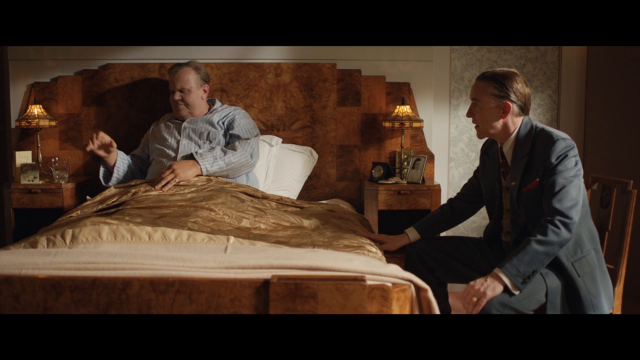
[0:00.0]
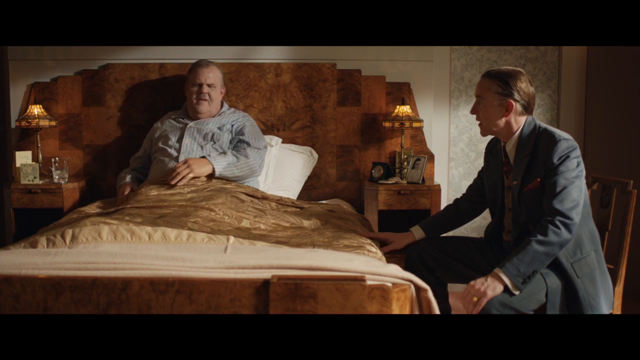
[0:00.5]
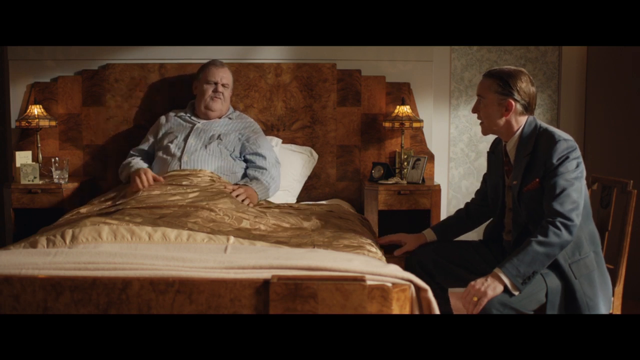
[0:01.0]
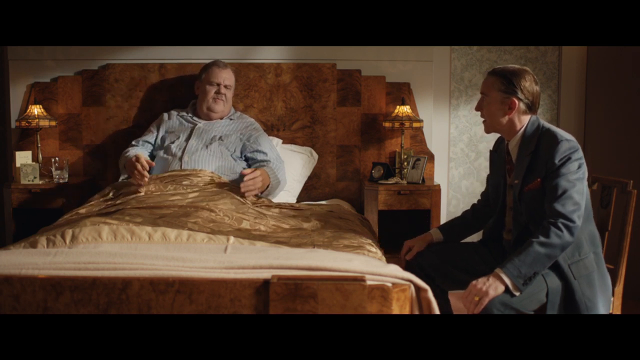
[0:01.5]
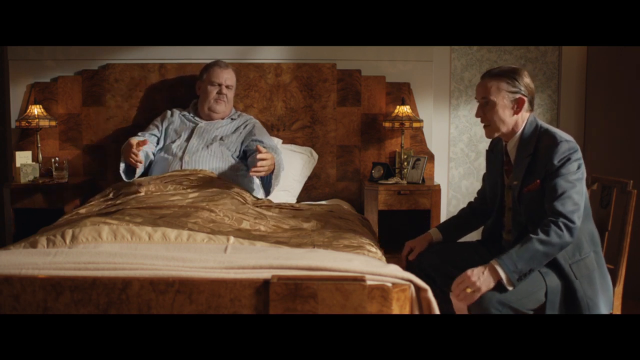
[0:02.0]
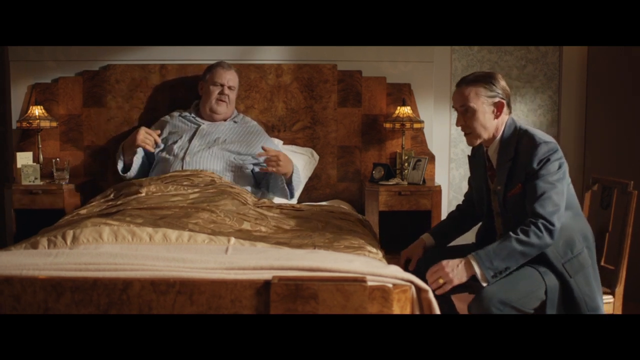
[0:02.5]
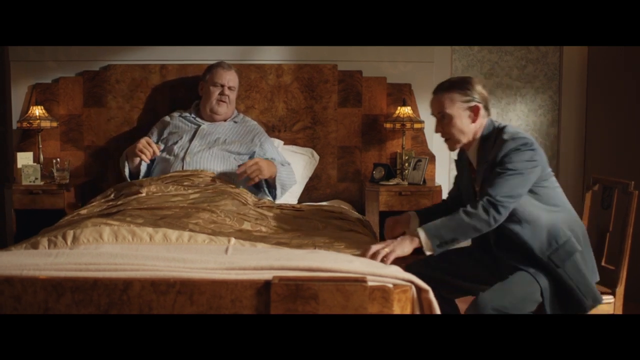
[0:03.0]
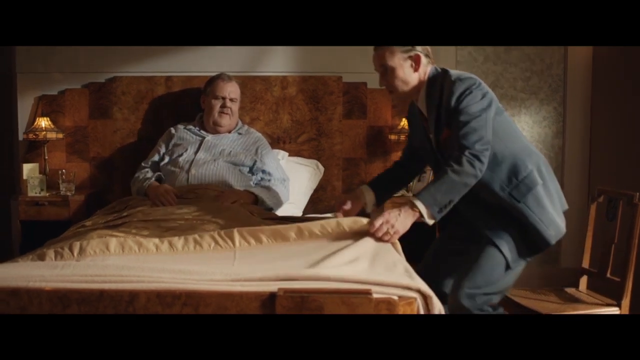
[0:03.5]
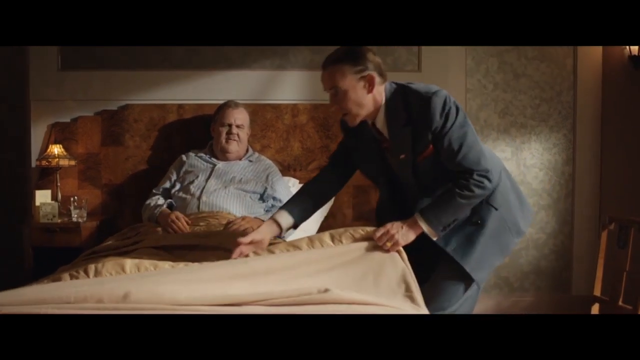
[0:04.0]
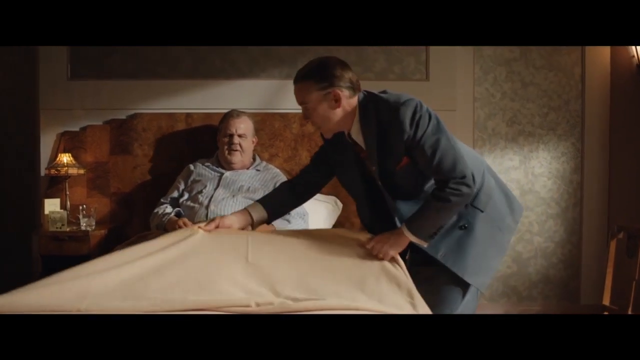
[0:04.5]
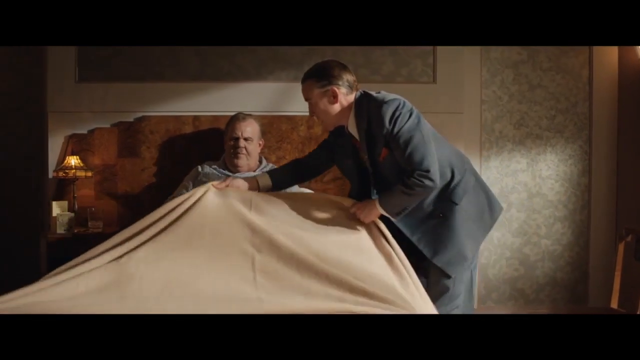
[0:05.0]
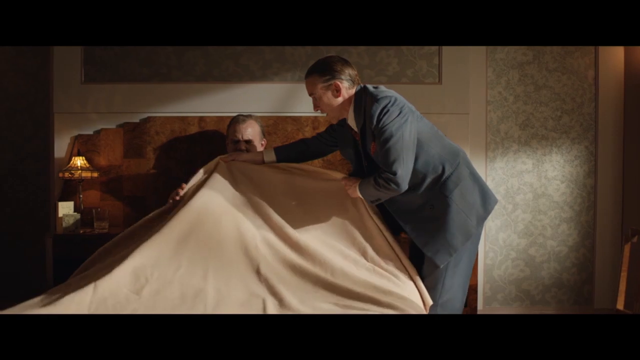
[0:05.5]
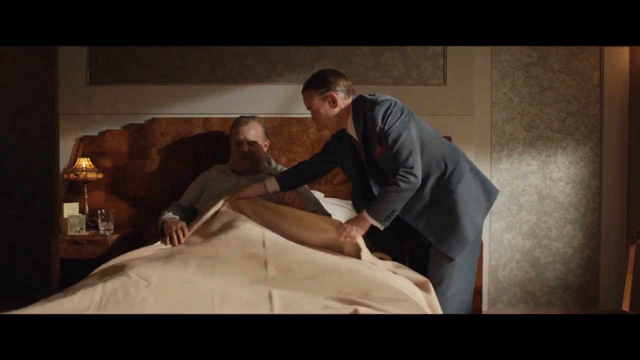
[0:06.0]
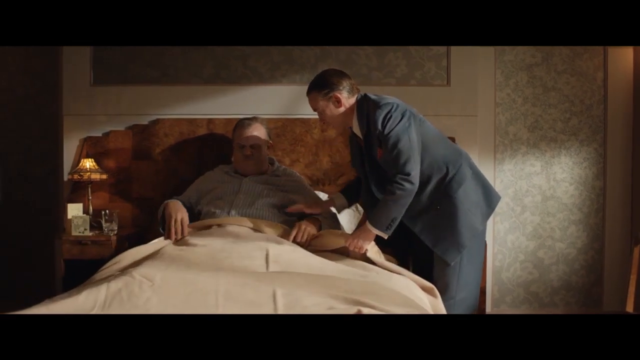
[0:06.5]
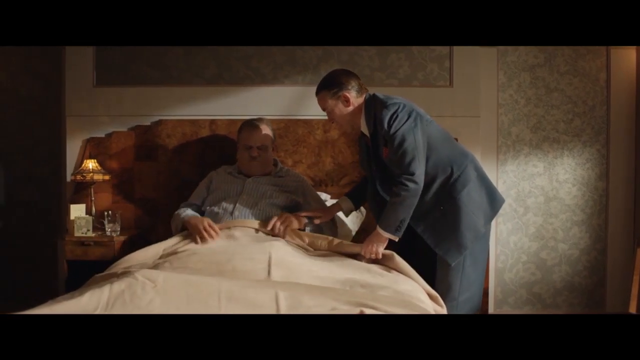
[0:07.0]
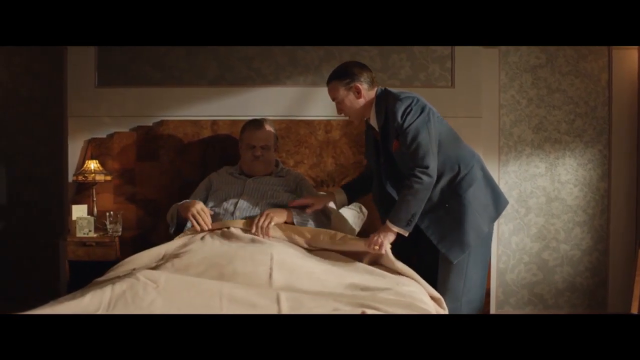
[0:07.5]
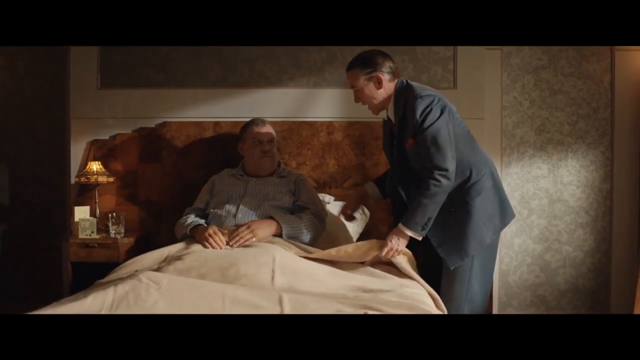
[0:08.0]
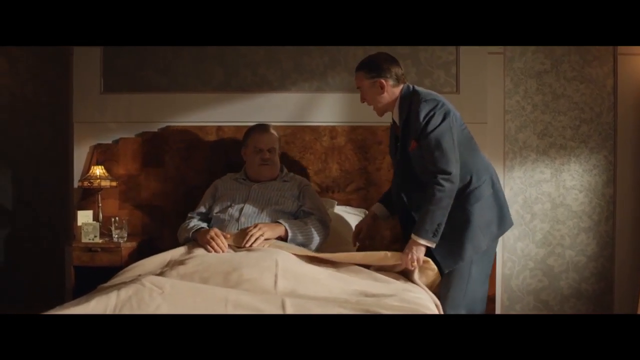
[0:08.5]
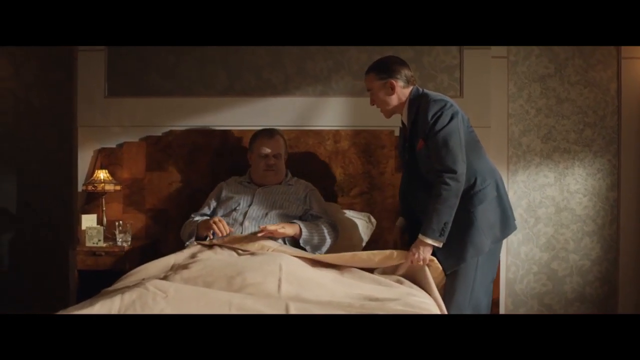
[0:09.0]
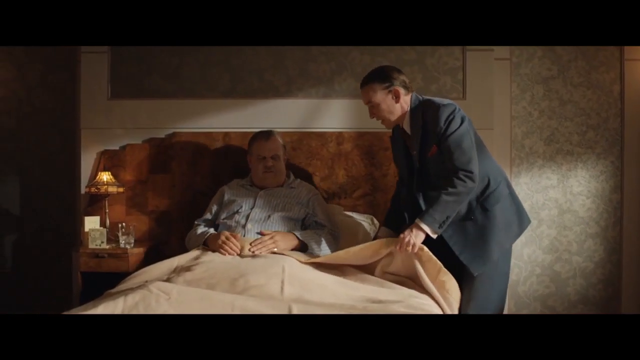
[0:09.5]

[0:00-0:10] A heavyset middle-aged man in blue-gray pajamas is lying in a brown bed with golden brown blankets, with brown lamps on each side of the bed and a brown headboard at the back. He is propped up with his back against the headboard, resting against two white pillows. A thin middle-aged man in a suit and red tie is sitting in a wooden chair at the foot of the bed, on the opposite end from the heavyset man. With a discomforted look on his face, the heavyset man turns toward the thin man in the brown chair and reaches out with both hands, gesturing toward him as he pulls the blankets up on him. The thin man gets up and pulls the blankets up to the heavyset man's waist.